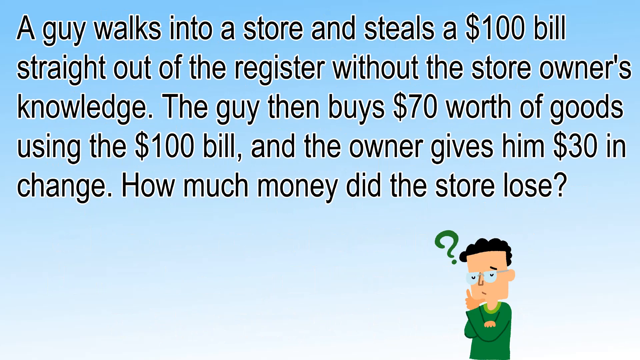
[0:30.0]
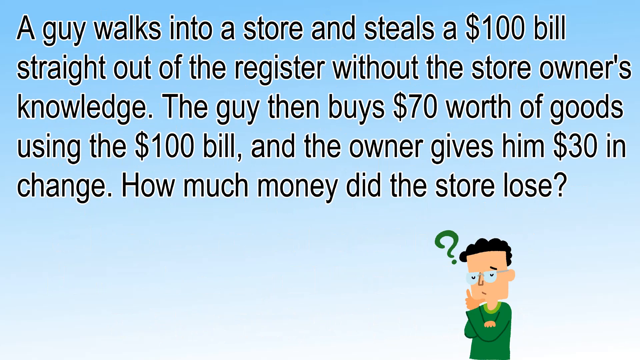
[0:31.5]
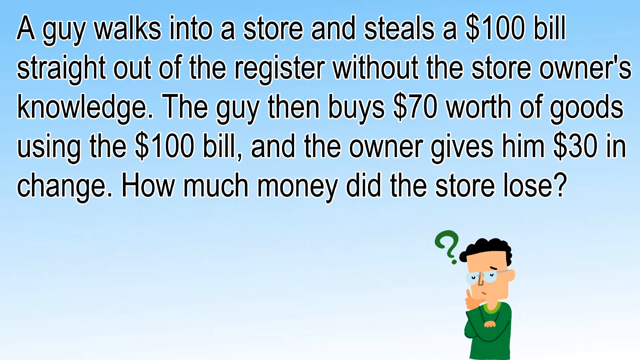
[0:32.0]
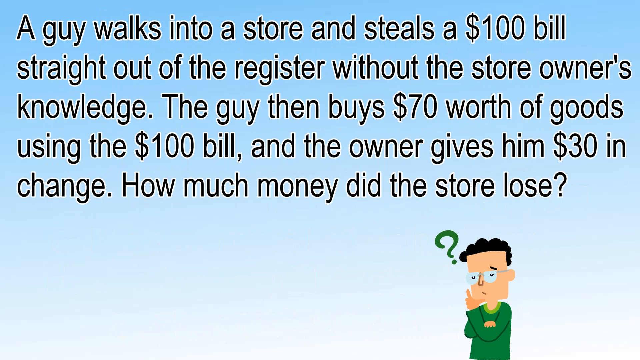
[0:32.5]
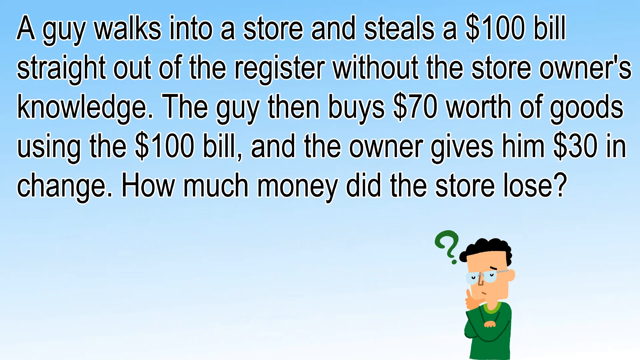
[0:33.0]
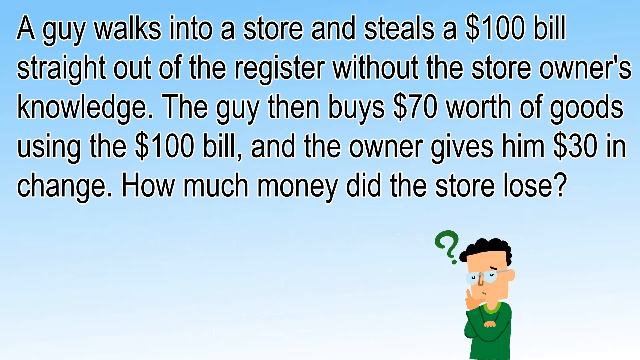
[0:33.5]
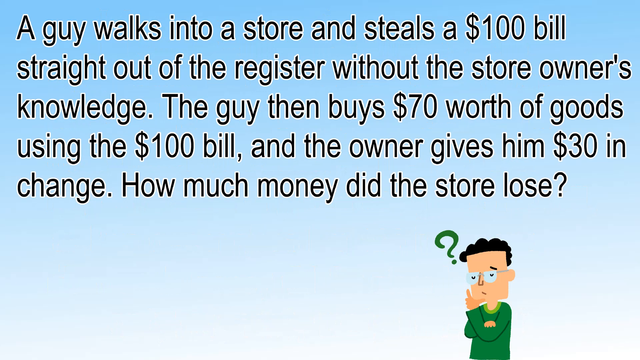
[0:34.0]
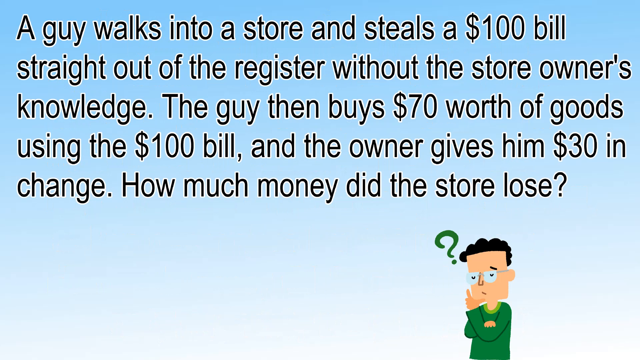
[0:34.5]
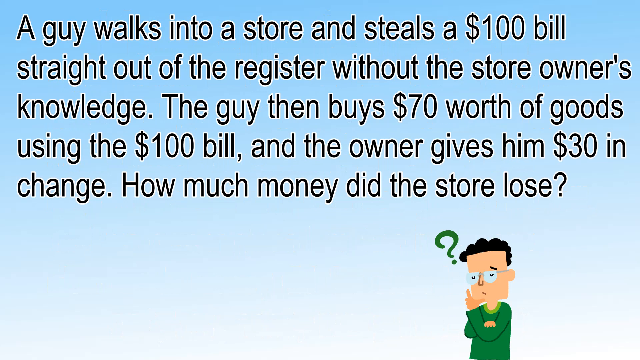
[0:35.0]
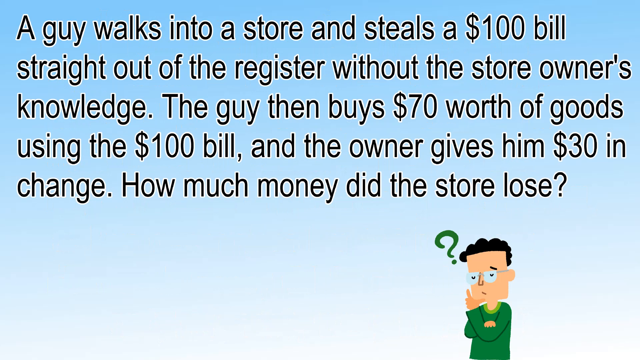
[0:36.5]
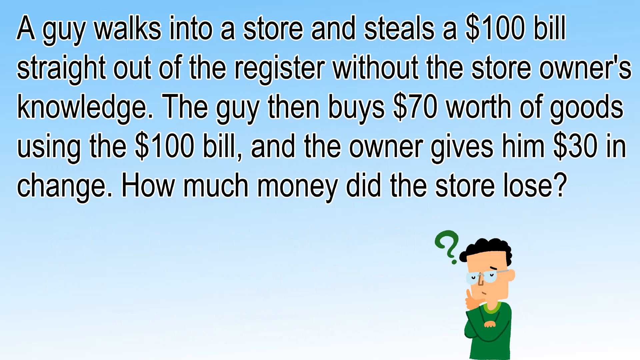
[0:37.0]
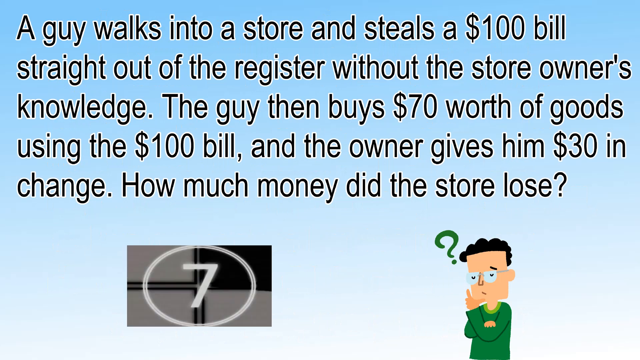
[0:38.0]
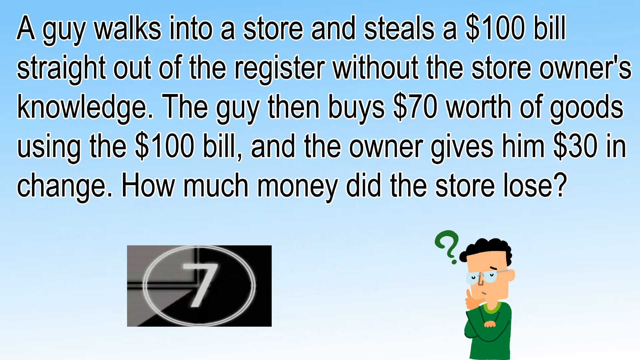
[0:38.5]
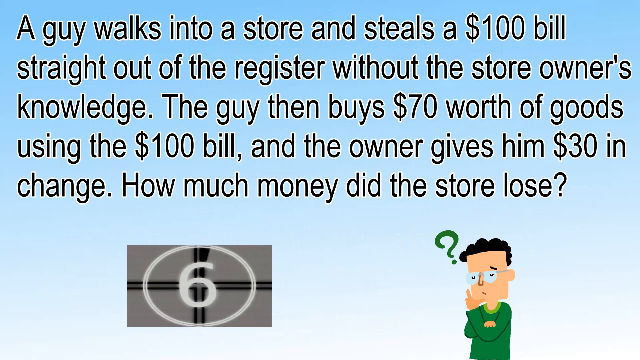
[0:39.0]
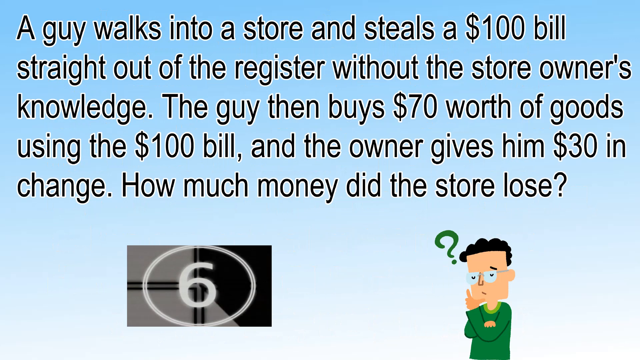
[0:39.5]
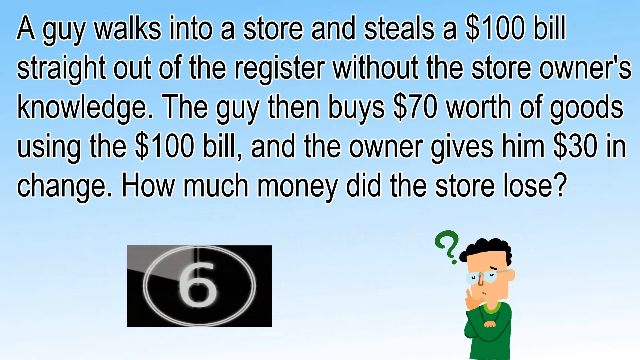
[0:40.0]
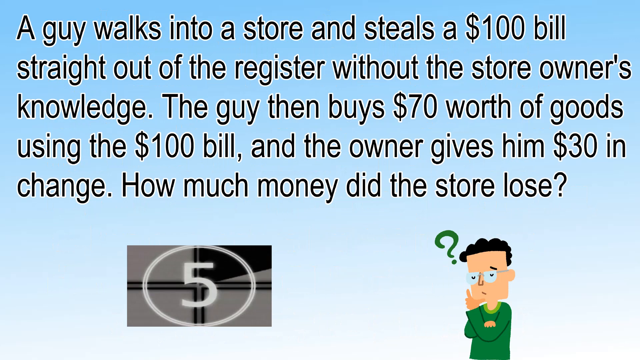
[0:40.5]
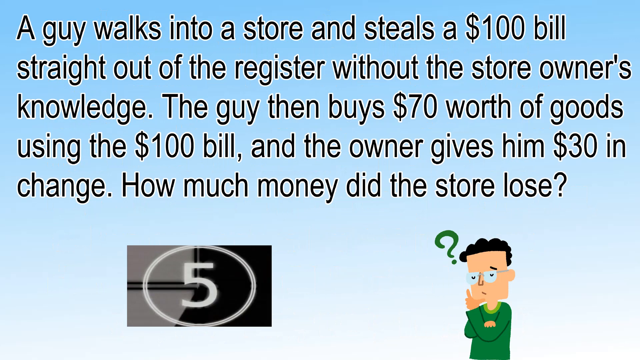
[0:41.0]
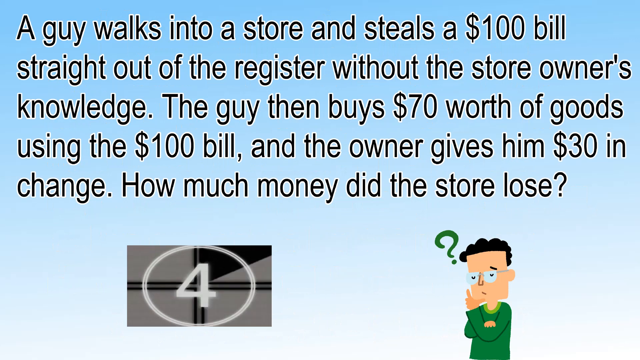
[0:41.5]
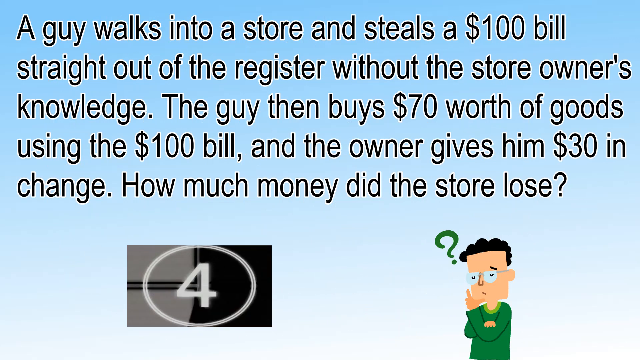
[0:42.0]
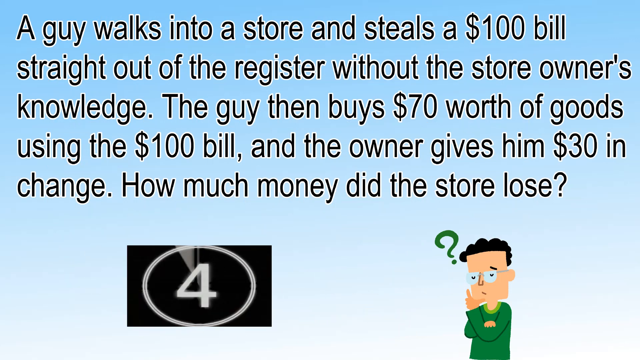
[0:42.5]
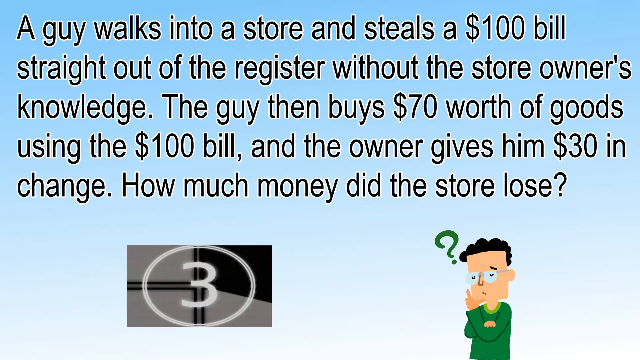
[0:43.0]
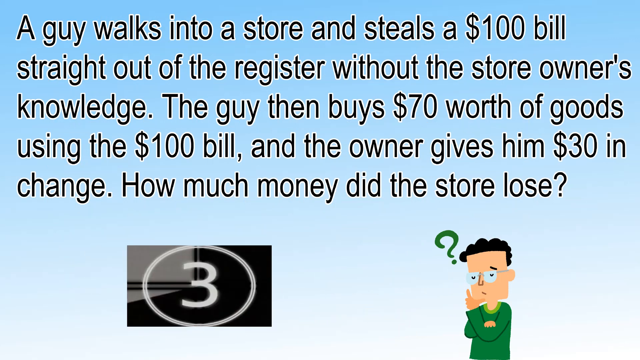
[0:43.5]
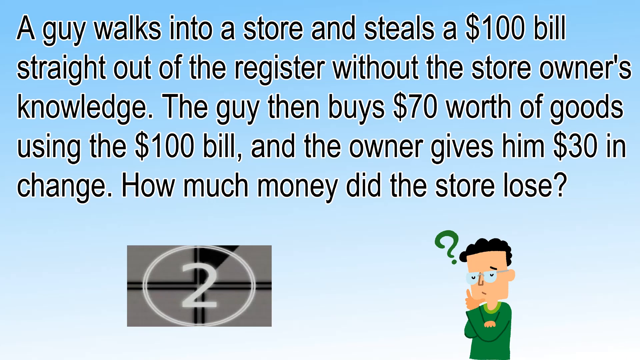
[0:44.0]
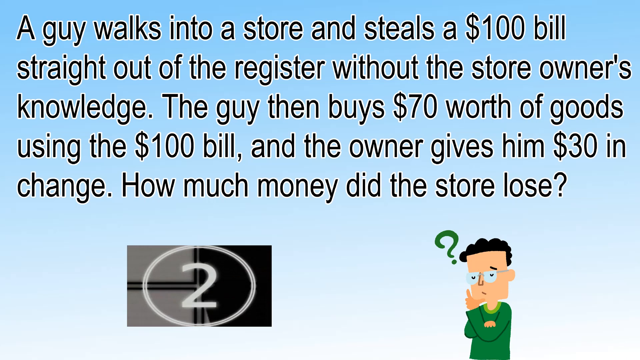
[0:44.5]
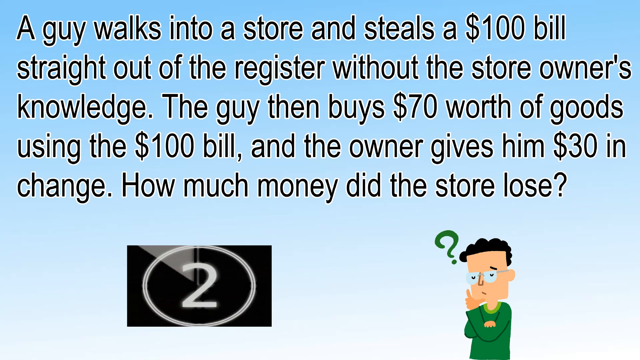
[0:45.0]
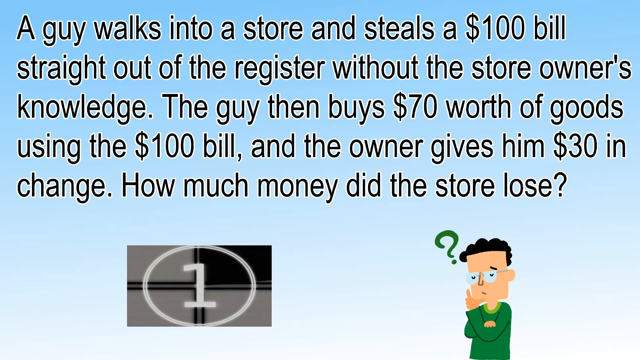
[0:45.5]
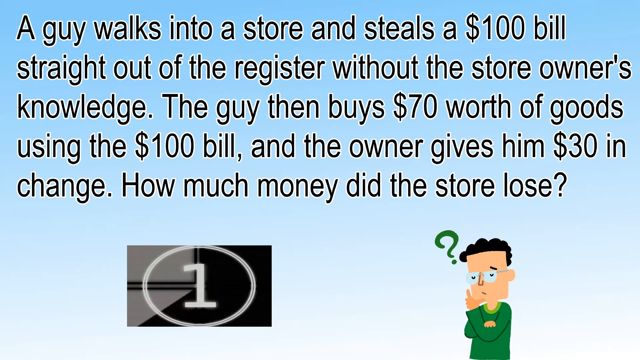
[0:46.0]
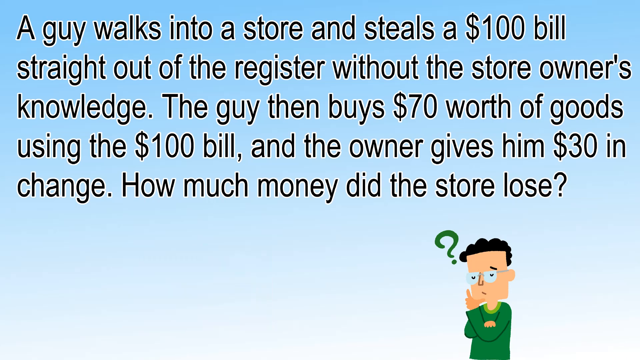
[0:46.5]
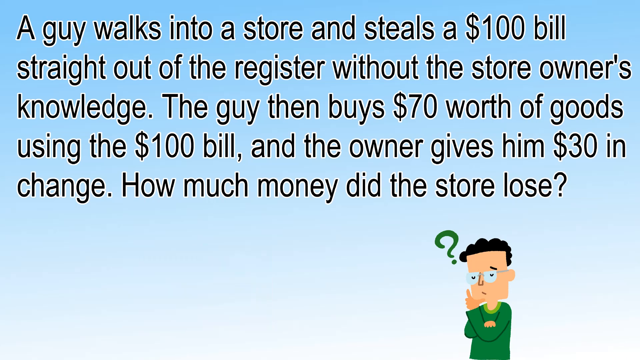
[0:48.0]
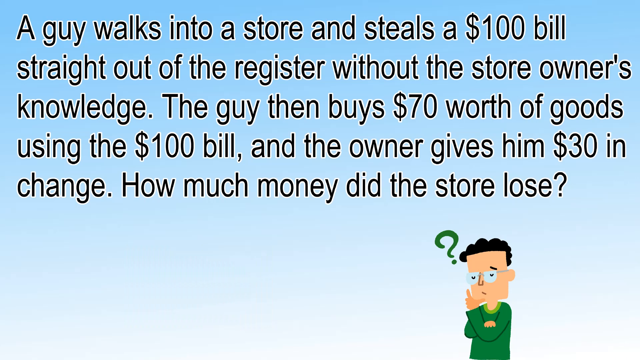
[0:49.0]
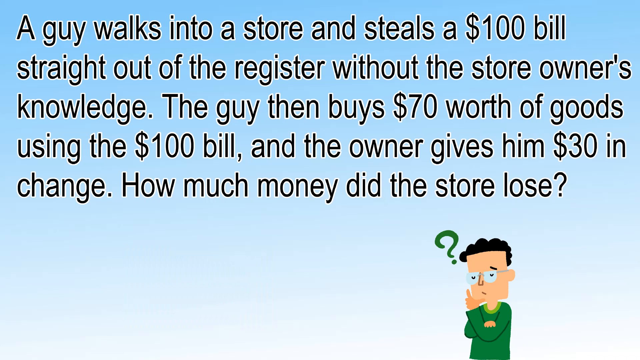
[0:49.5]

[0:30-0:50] Large black text takes up most of the light blue screen and reads "A guy walks into a store and steals a $100 bill straight out of the register without the store owner's knowledge. The guy then buys $70 worth of goods using the $100 bill and the owner gives him $30 in change. How much money did the store lose?" At the bottom is a small cartoon clip art image of a guy who looks like he has curly black hair, wearing a green long-sleeved shirt and glasses, with a green question mark by his head. His arms appear to be crossed, with one hand holding his chin as if he is thinking. The video seems to pause on this screen for a little while, giving the viewer time to read the problem and think of the answer.